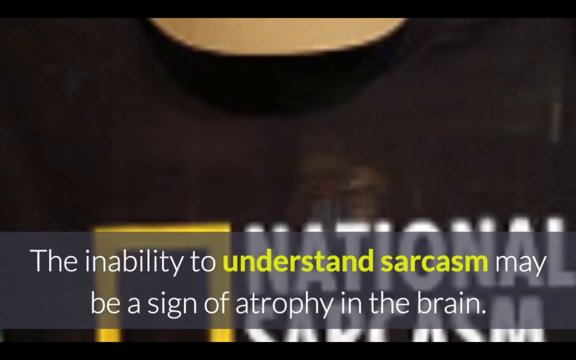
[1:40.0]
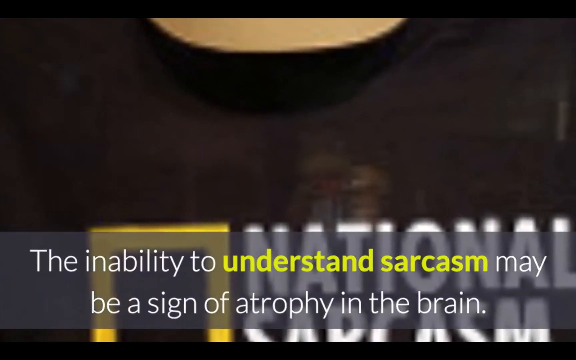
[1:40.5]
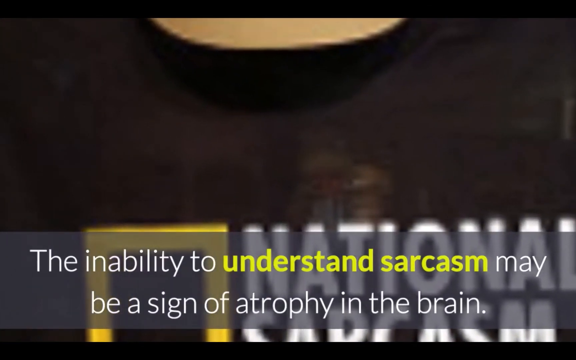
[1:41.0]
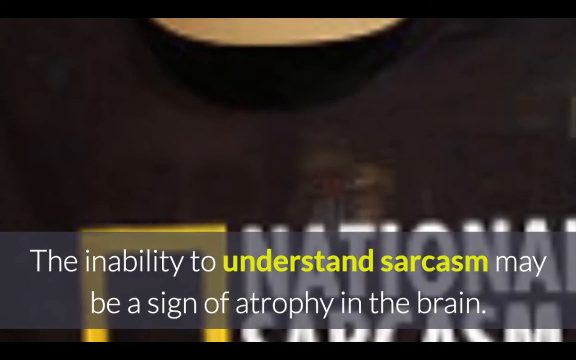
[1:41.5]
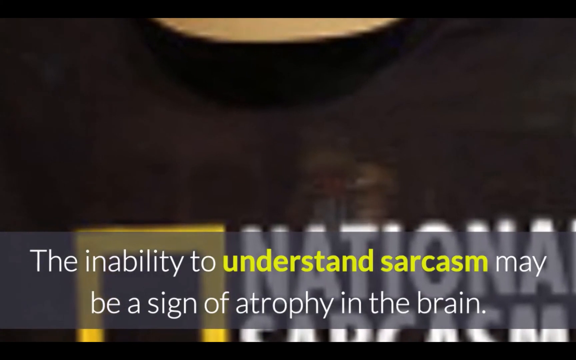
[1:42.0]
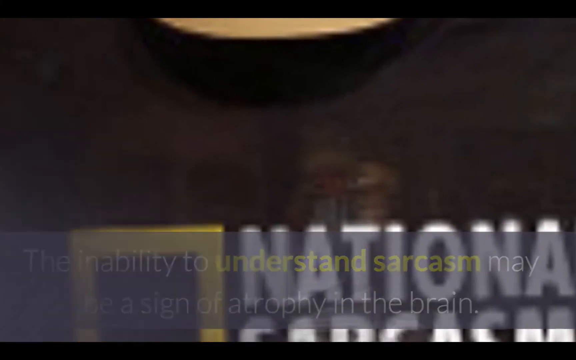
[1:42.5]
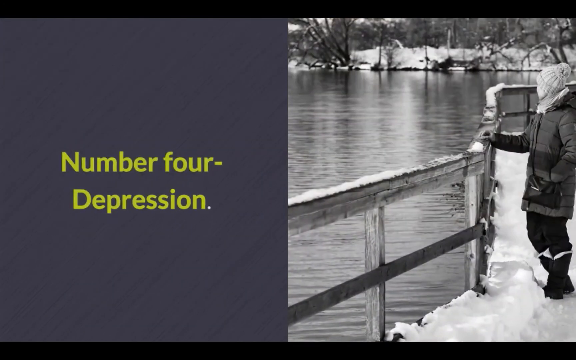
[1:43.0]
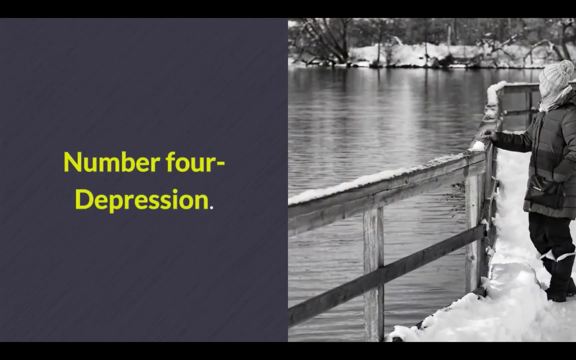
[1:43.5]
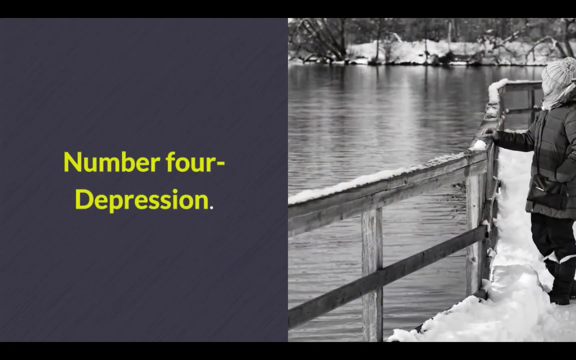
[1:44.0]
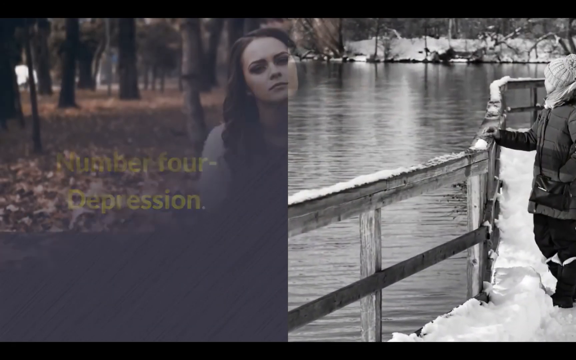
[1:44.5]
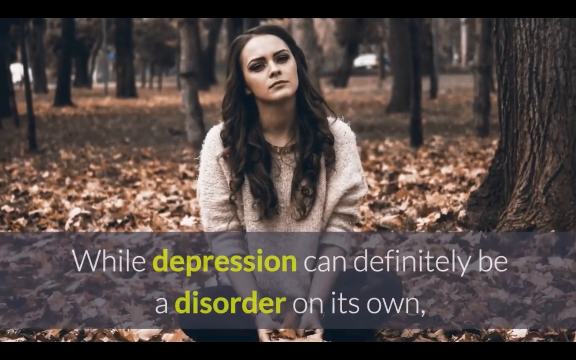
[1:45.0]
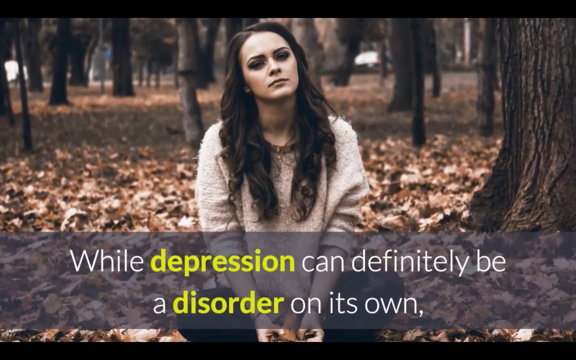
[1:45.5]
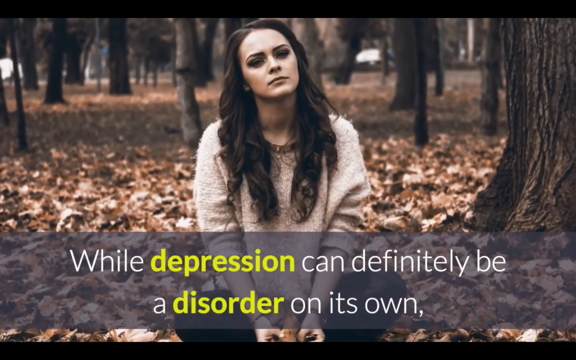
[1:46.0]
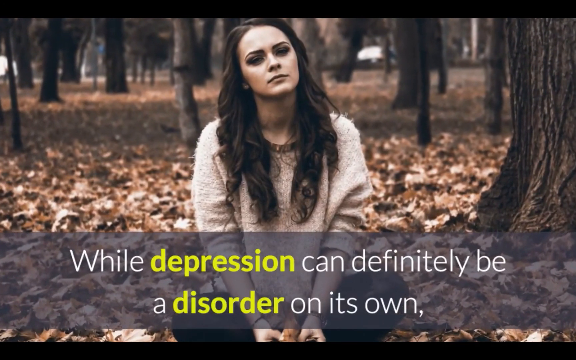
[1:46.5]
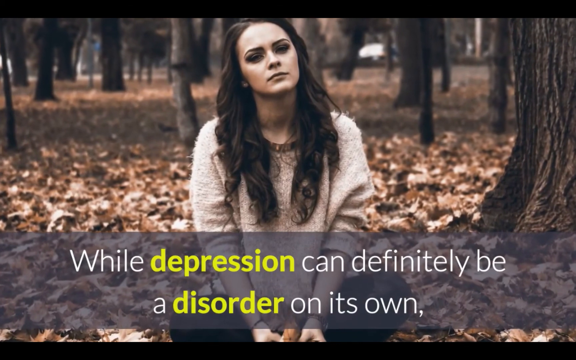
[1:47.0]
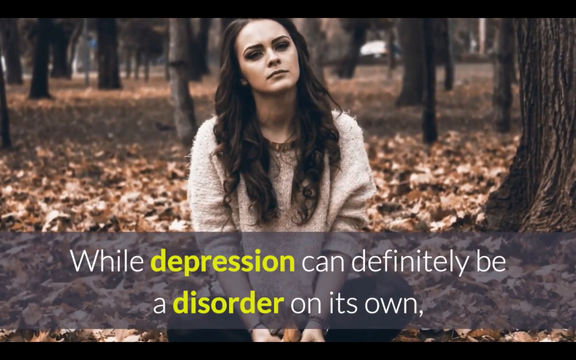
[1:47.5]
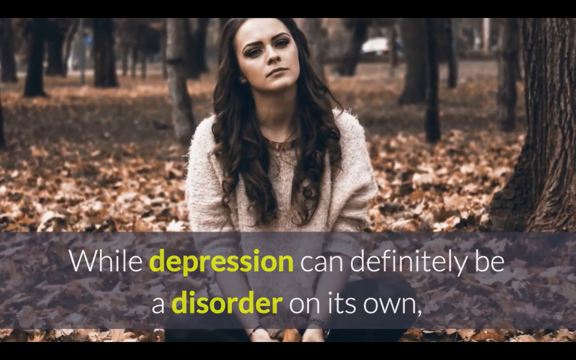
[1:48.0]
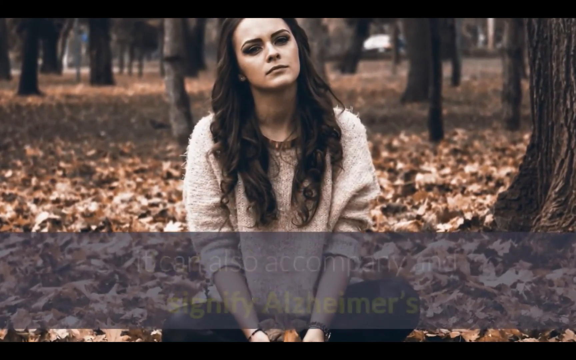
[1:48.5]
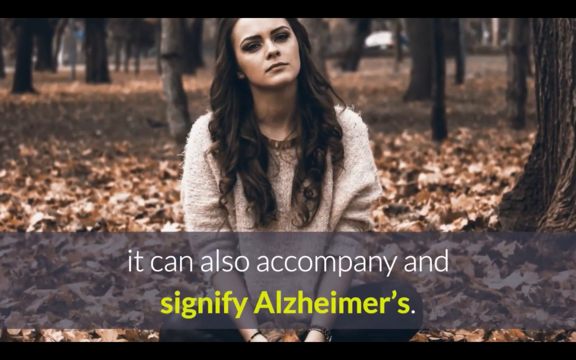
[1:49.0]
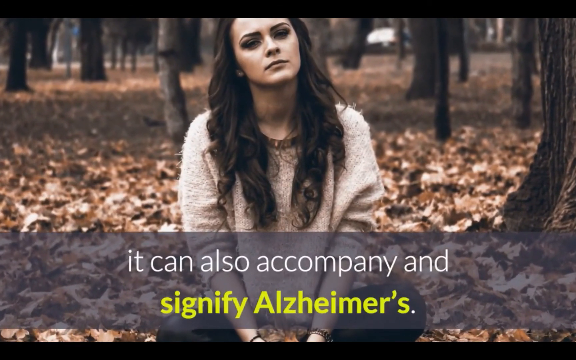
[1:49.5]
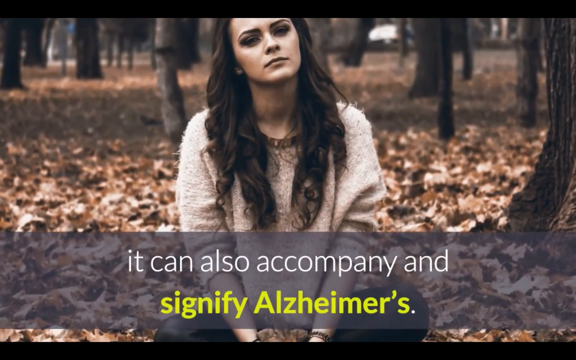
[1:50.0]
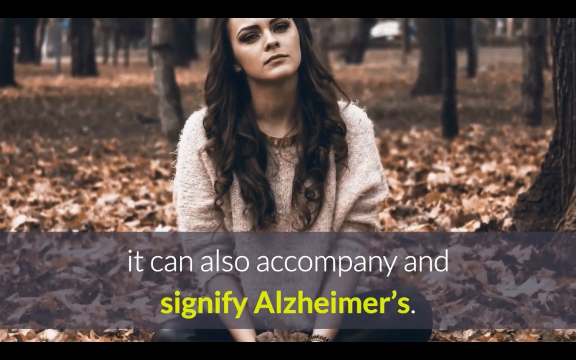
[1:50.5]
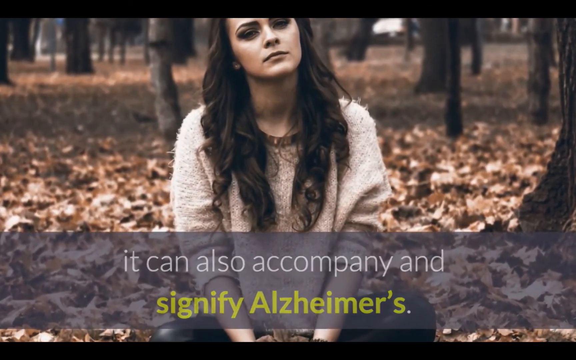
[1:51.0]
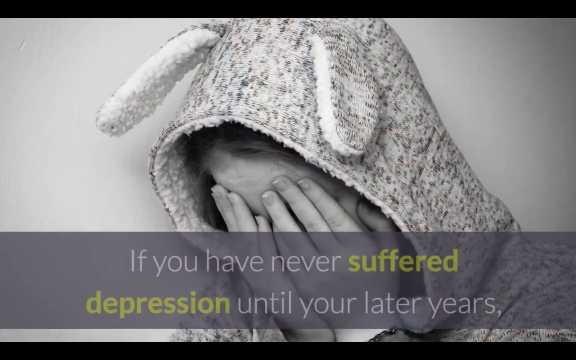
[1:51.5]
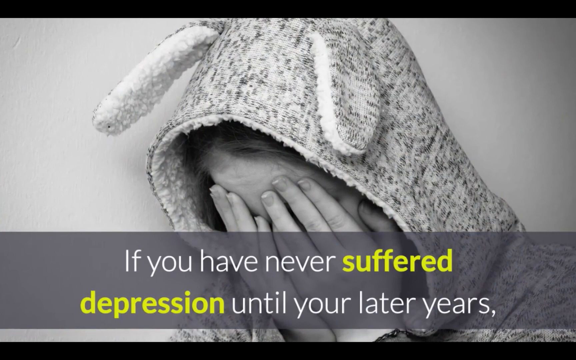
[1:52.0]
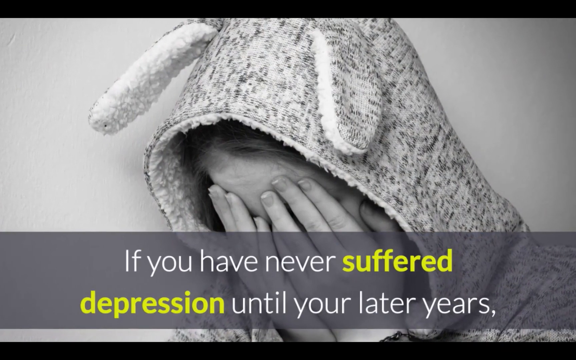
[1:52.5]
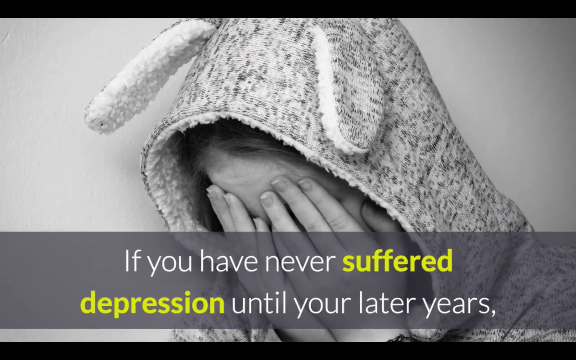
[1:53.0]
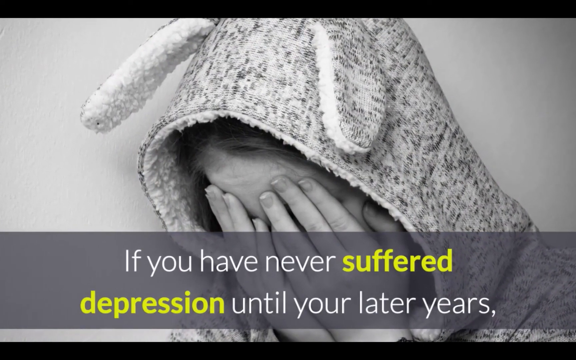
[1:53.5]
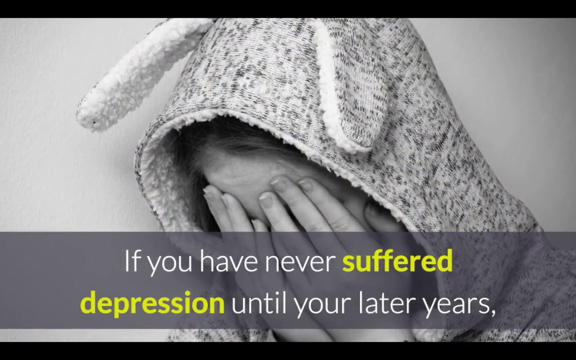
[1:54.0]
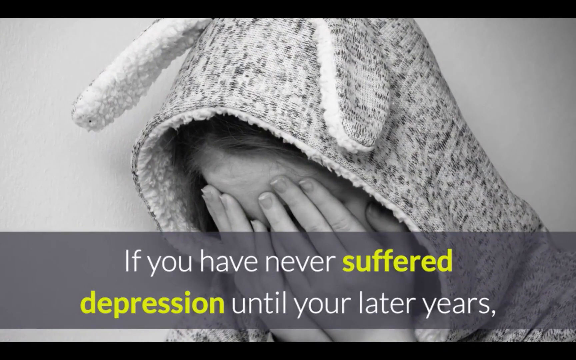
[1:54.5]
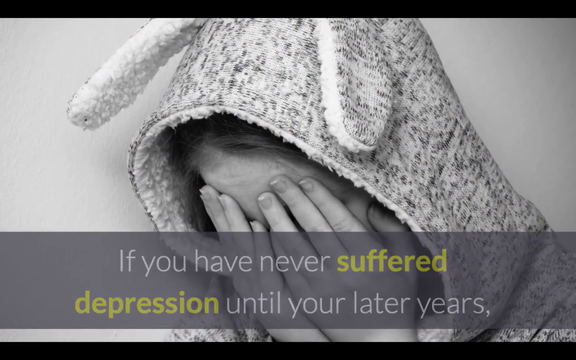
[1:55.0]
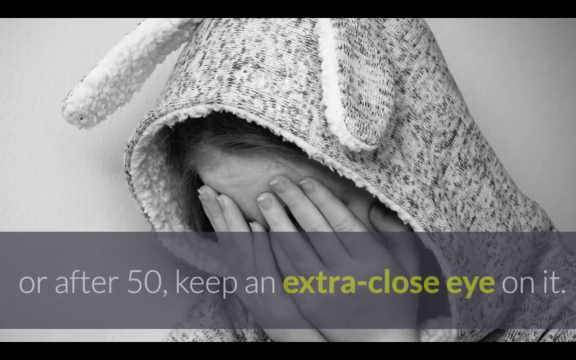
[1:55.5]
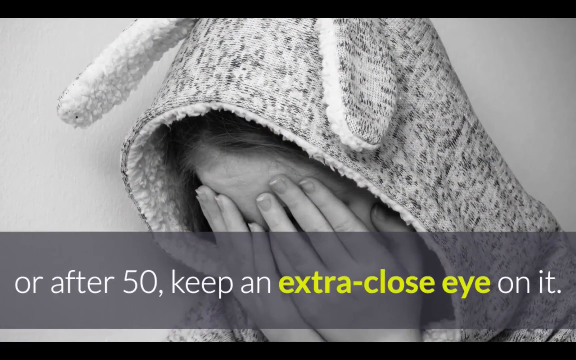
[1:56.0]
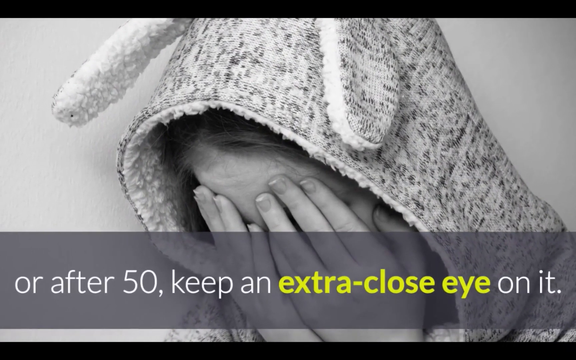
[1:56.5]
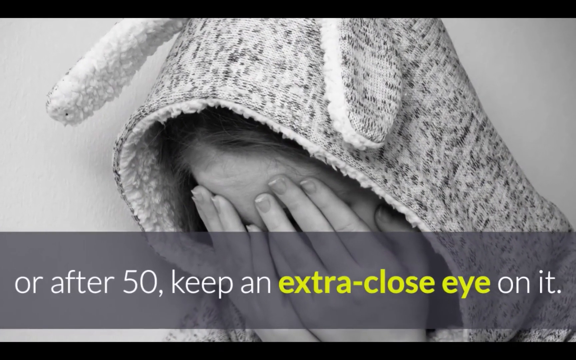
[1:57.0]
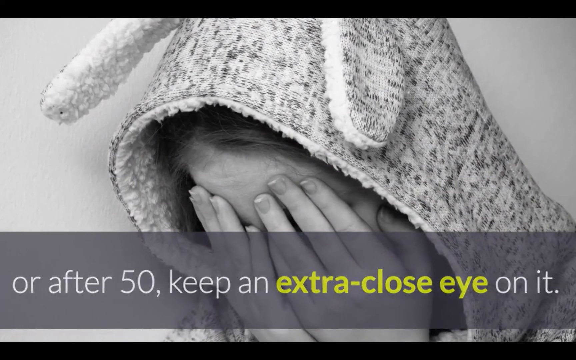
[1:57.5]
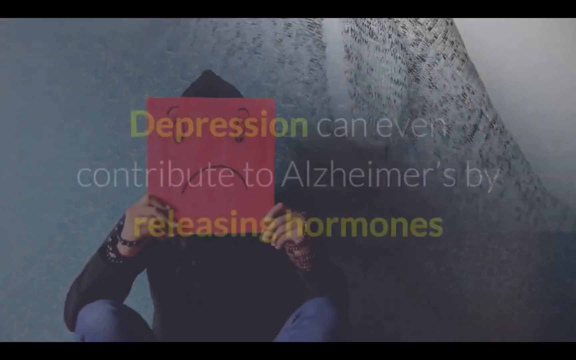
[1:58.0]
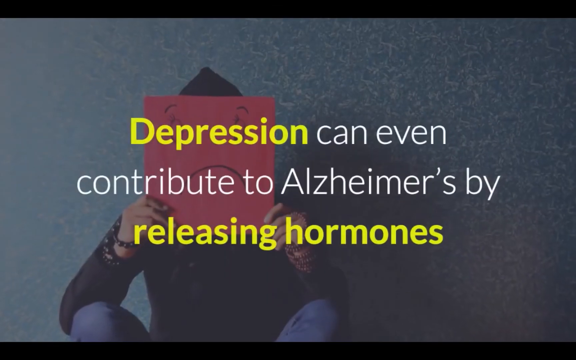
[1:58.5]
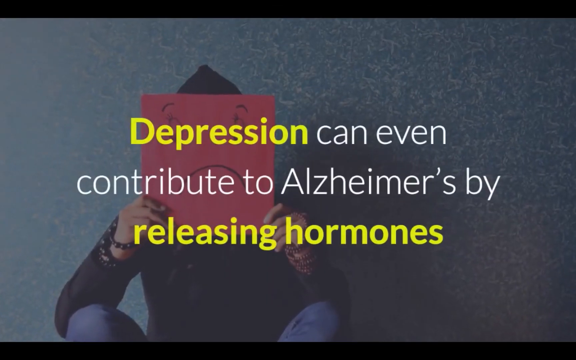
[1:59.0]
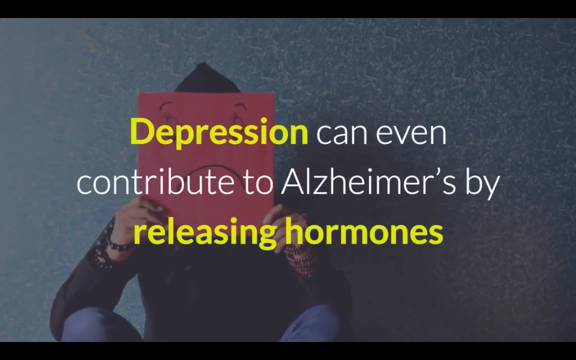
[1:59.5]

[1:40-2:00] A person wears a black t-shirt with white words reading "national SARCASM," with a message saying "the inability to understand may be a sign of atrophy in the brain." The scene slides to two columns: the left column has yellow text reading "number for depression," and the other side shows a young person standing on snow, watching the water, wearing a warm jacket and boots. A lady sits under trees, looking like she is thinking, wearing a fluffy jacket, with a message reading "while depression can definitely be a disorder on its own." A young girl puts her hands to her face, with a message reading "if you have never suffered depression until your are later years."